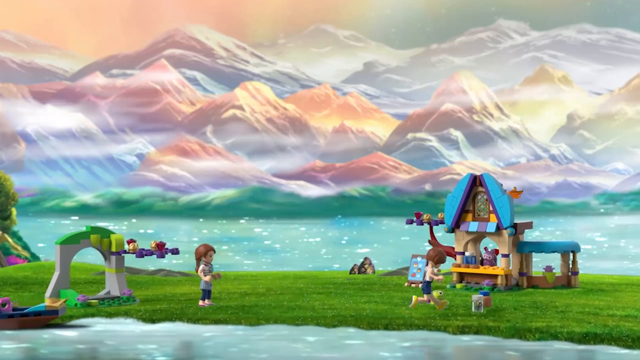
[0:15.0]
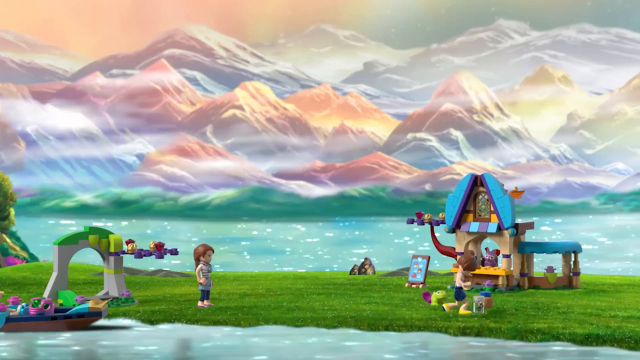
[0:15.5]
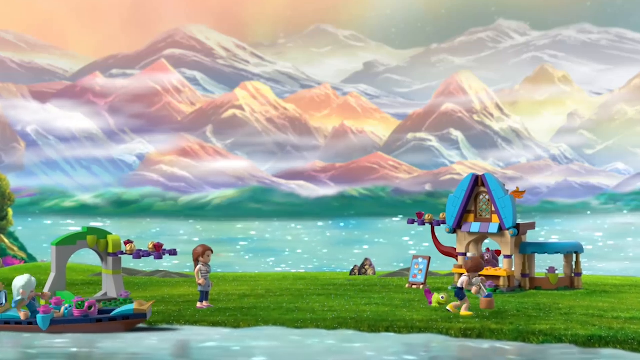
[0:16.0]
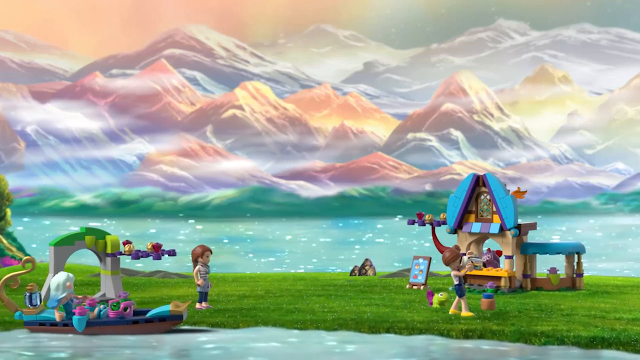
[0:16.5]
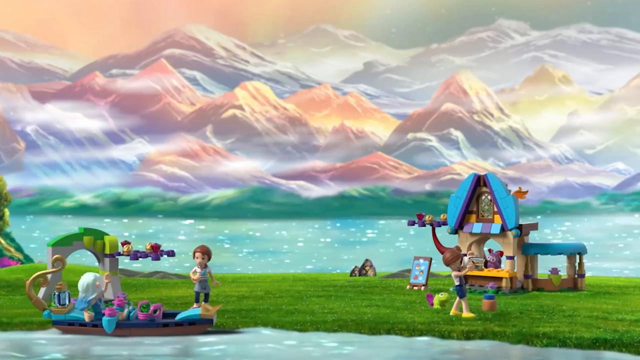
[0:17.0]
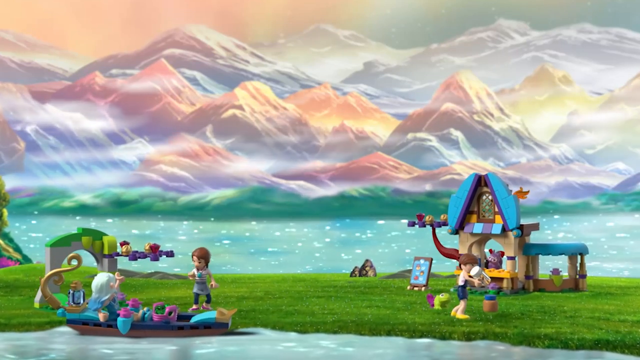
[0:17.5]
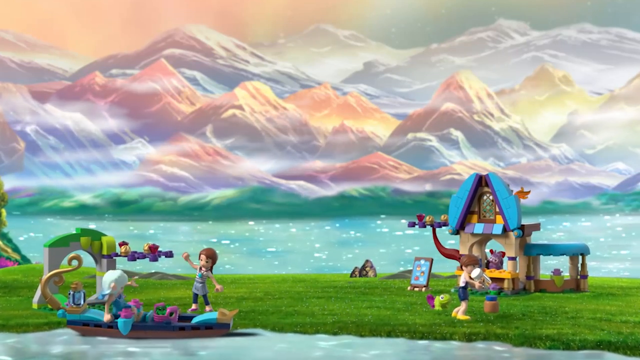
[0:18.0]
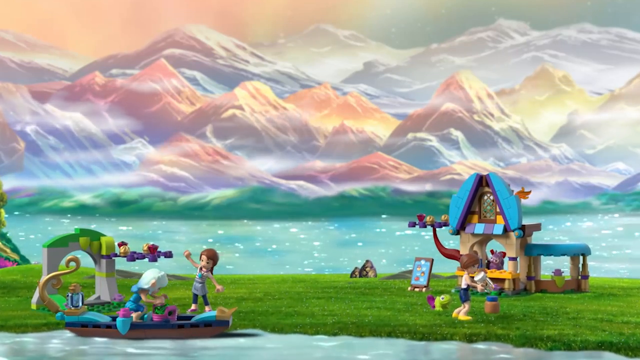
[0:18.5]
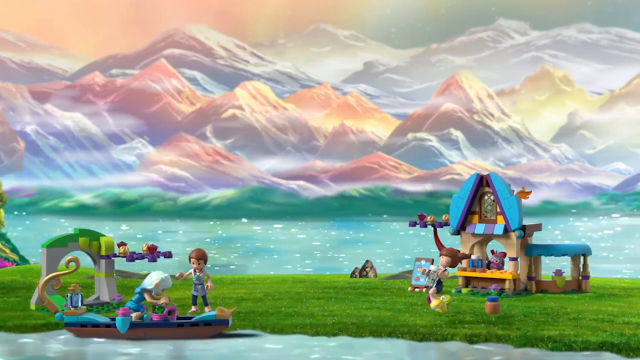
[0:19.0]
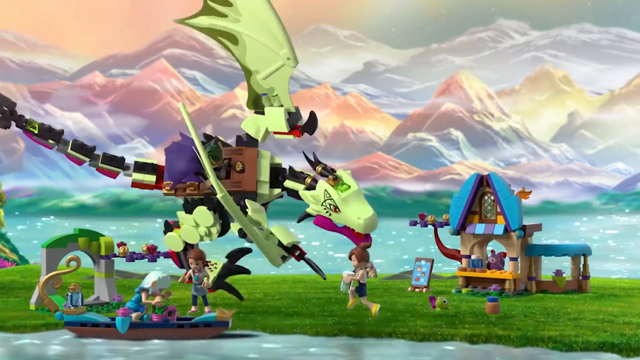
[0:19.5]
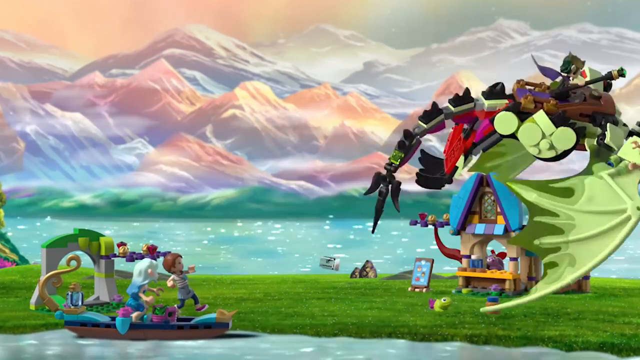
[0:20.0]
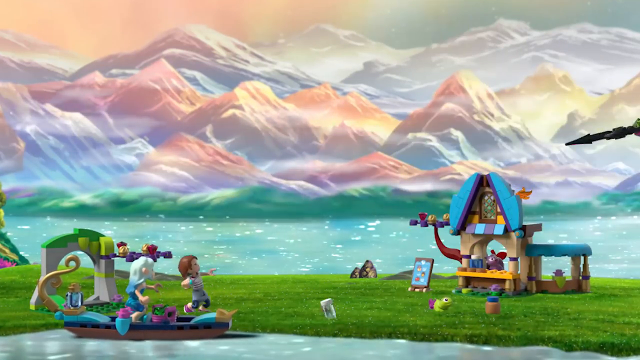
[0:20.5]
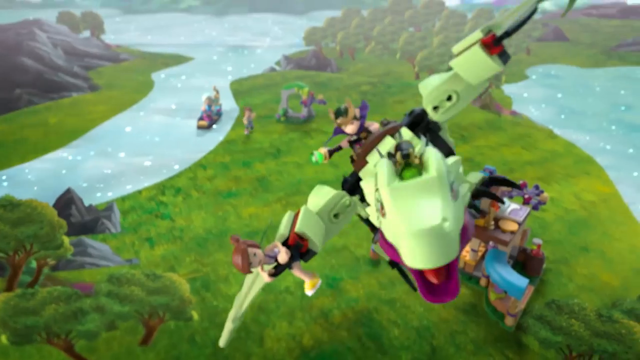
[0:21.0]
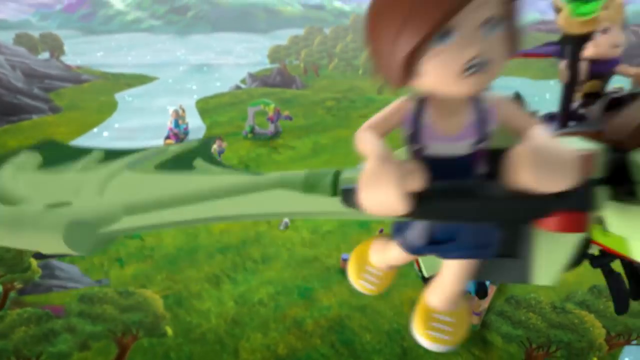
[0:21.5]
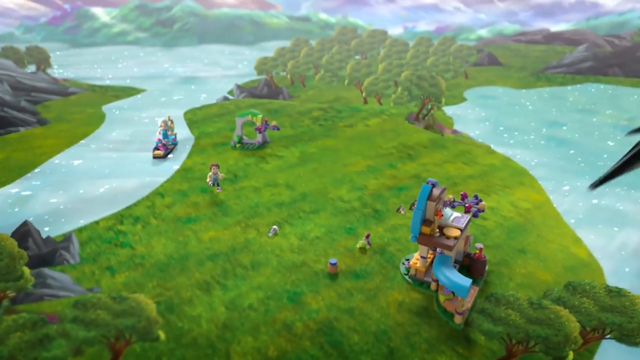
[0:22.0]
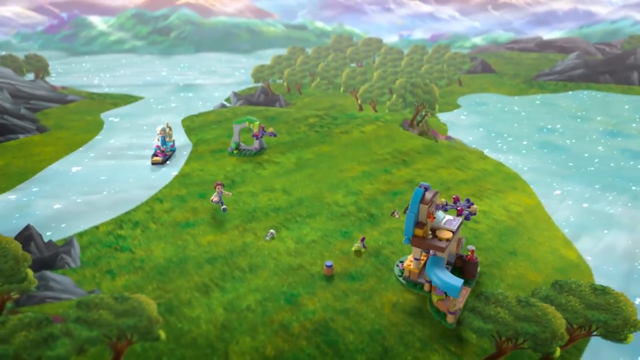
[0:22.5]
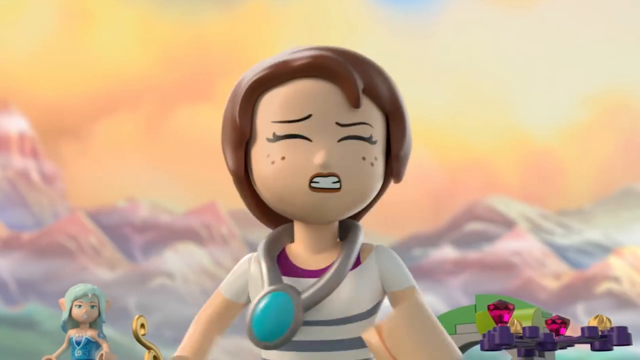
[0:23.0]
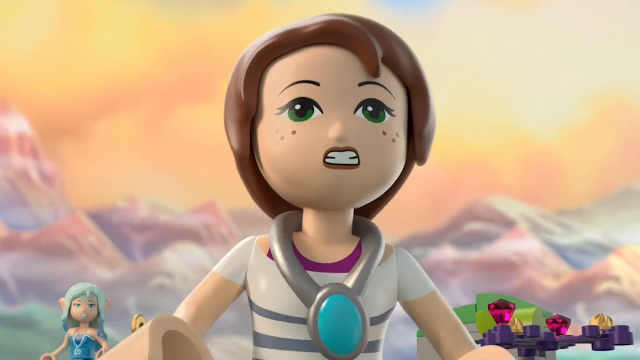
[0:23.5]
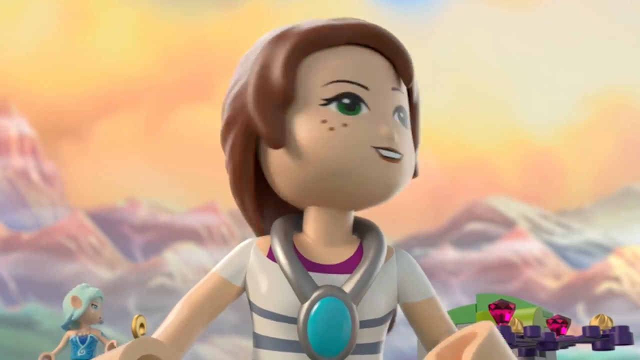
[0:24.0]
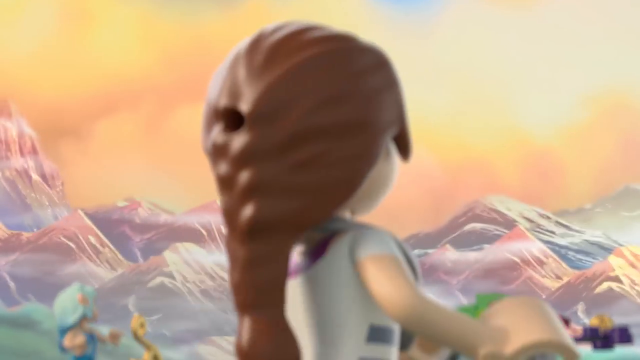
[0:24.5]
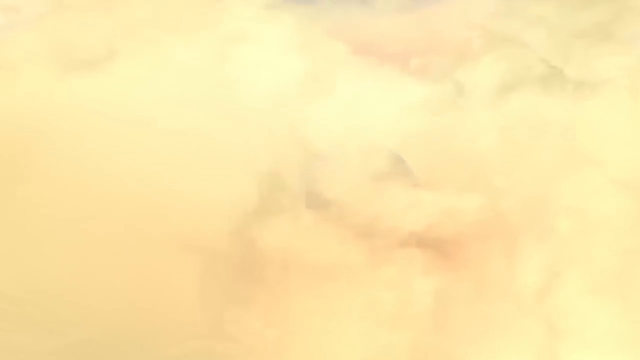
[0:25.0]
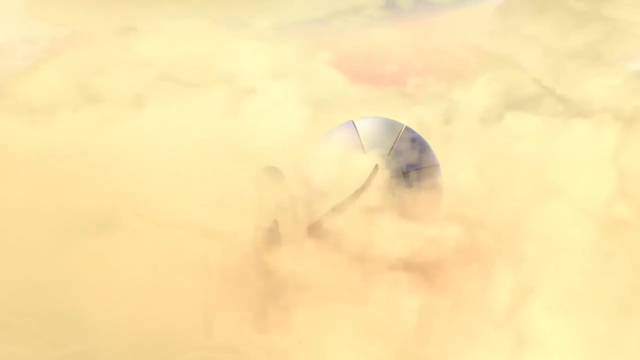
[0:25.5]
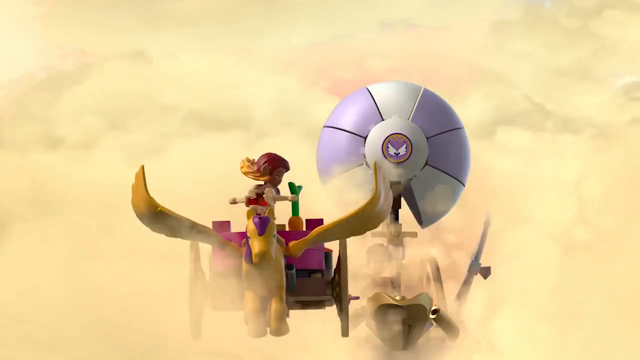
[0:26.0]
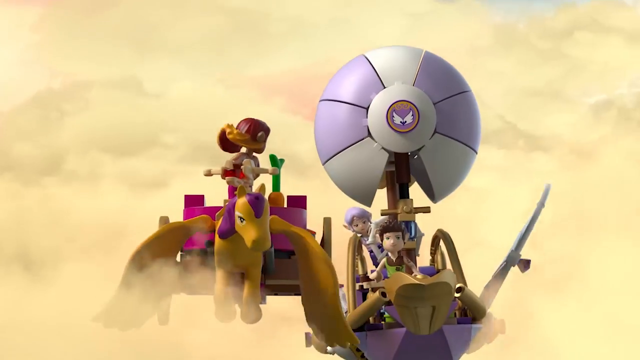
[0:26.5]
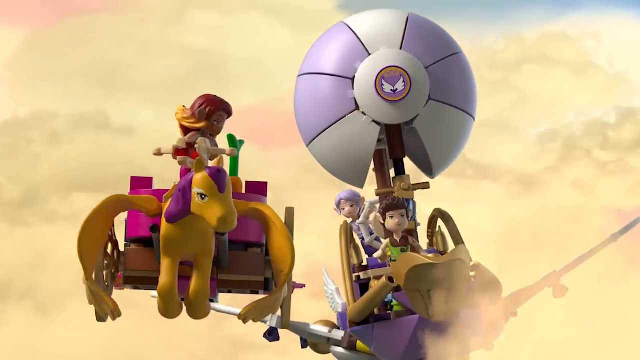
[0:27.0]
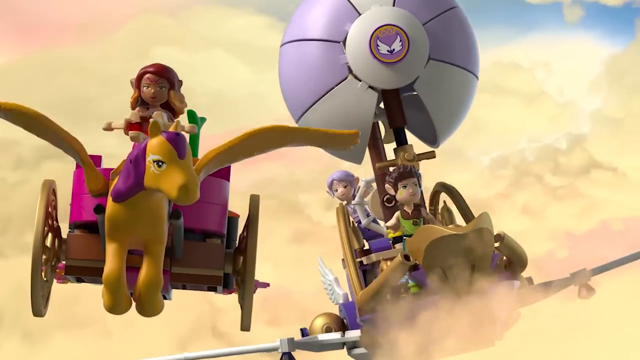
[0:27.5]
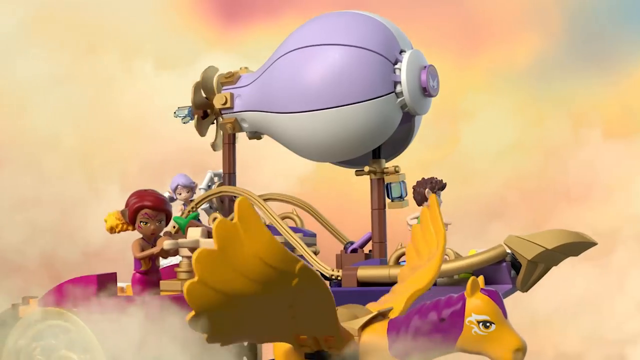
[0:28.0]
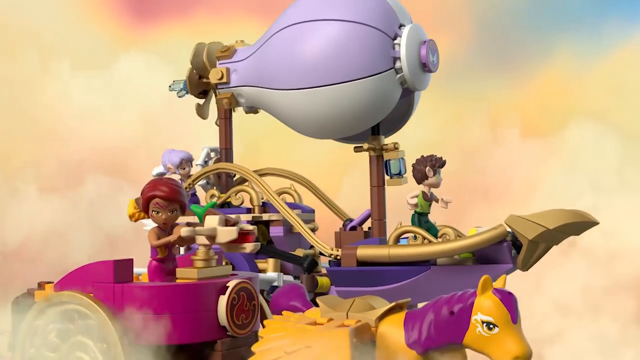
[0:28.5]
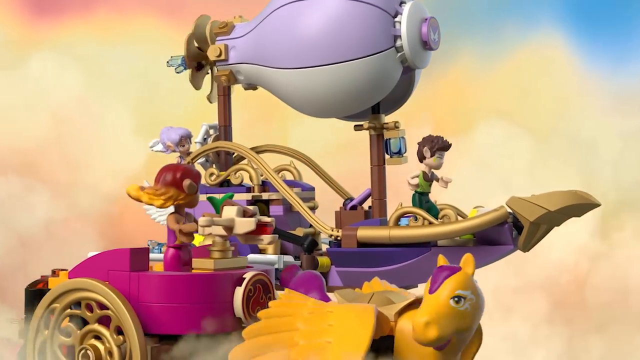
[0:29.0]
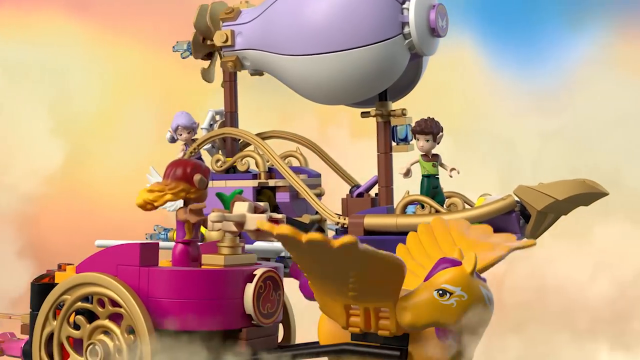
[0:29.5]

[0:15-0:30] The girl who ran past the first one reaches the stand, picks something up from it, and looks at it. Meanwhile, another girl comes over on a boat through a river. She appears to be an elf, with elf ears and silver-bluish hair, and she is checking something on the boat. As the two are waving to each other, a dragon-like creature swoops in and carries the girl who was at the stand up into the sky. They both look worried as they look up. The video then moves to a scene in the sky, not with the dragon this time but with two people on an airship and one on a flying horse of some type. All of them are Lego figures, and the whole world is kind of made of Legos. The three characters in the sky are kind of looking around, and the clouds are a very orangey color.